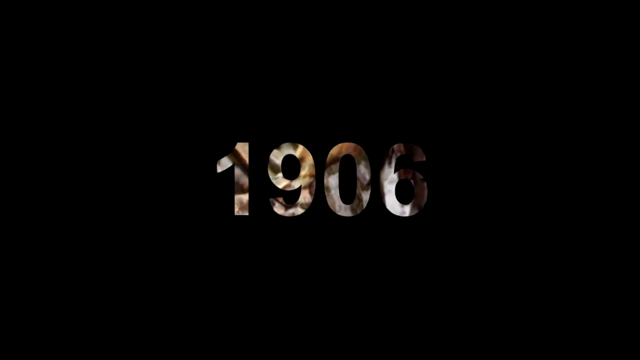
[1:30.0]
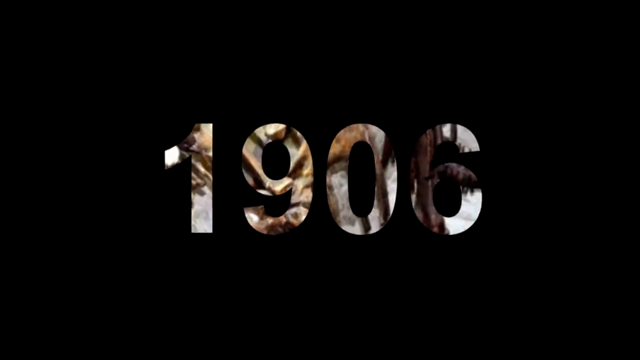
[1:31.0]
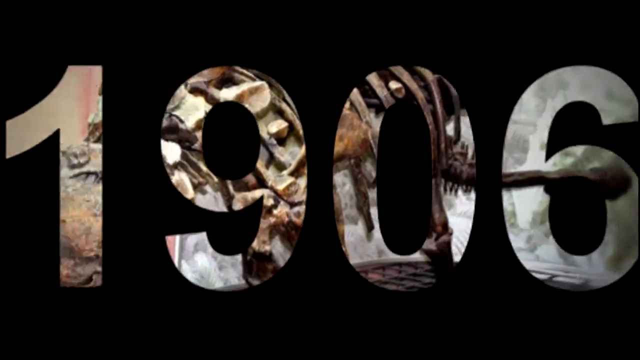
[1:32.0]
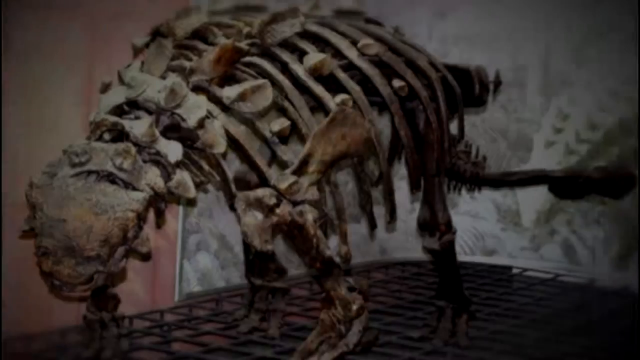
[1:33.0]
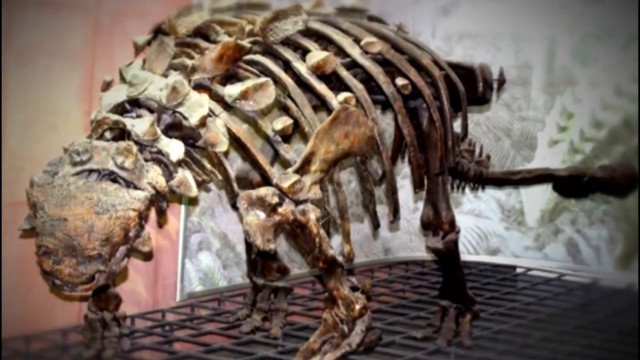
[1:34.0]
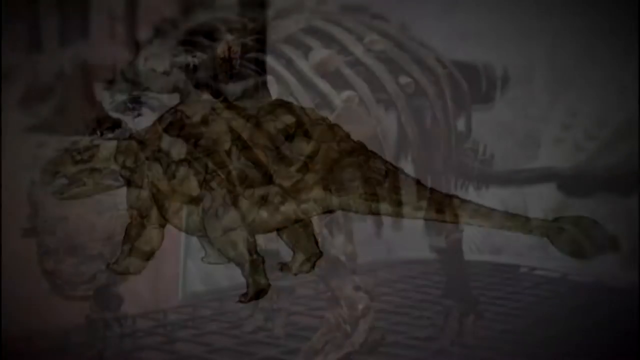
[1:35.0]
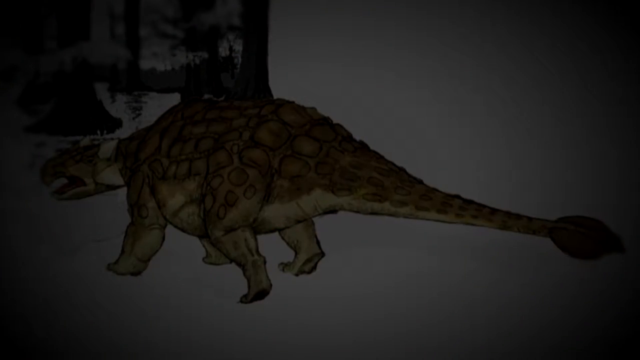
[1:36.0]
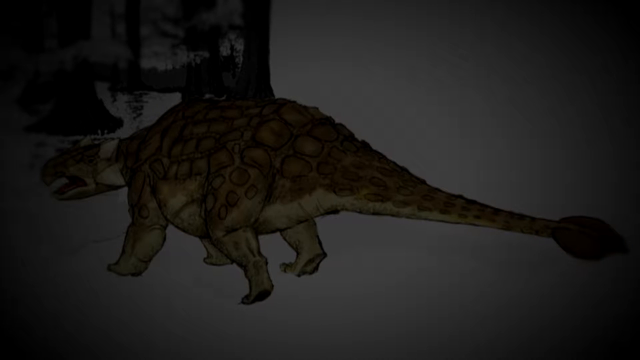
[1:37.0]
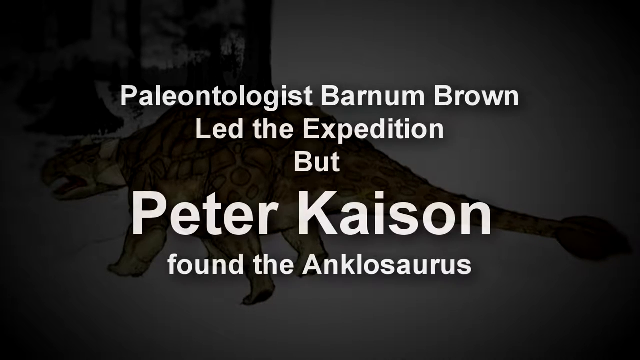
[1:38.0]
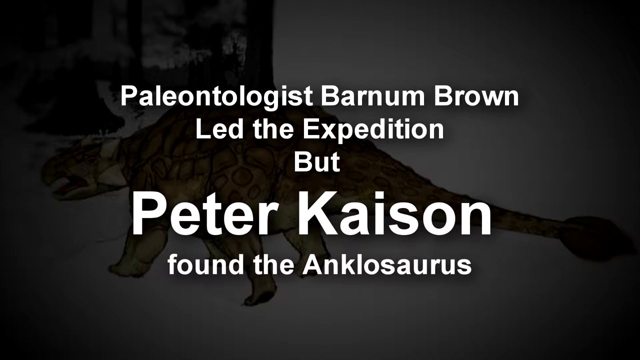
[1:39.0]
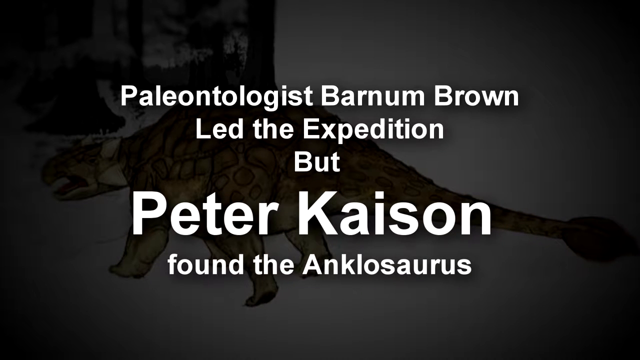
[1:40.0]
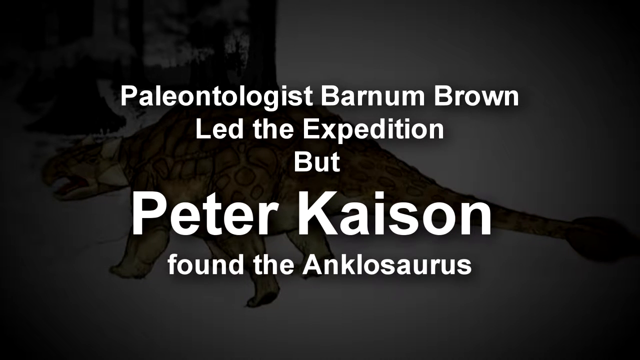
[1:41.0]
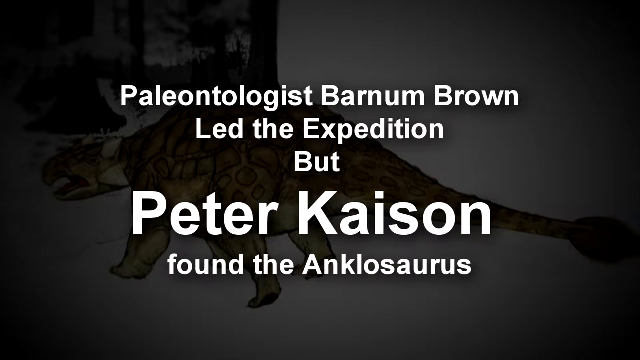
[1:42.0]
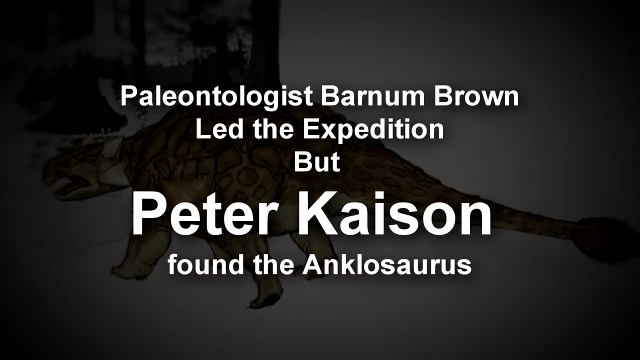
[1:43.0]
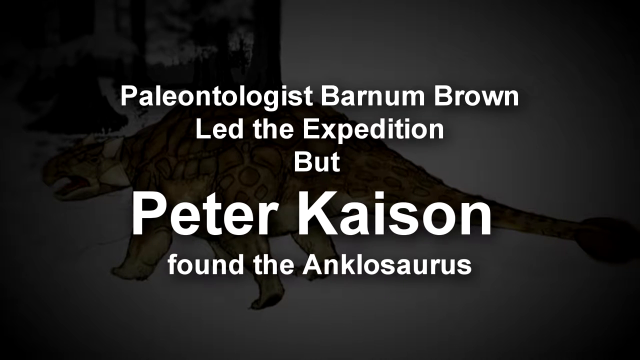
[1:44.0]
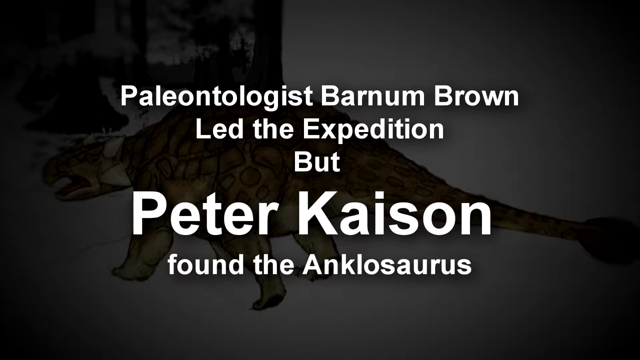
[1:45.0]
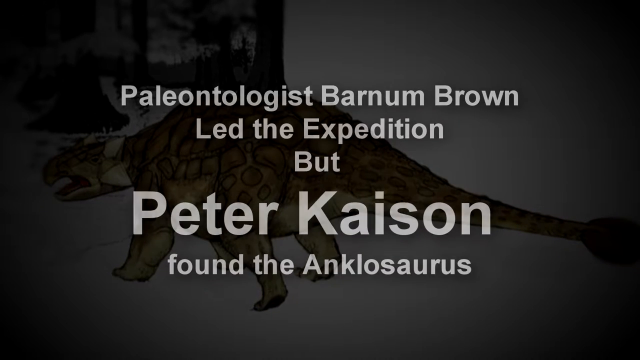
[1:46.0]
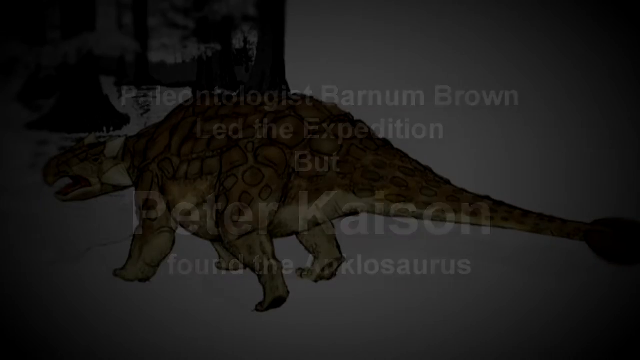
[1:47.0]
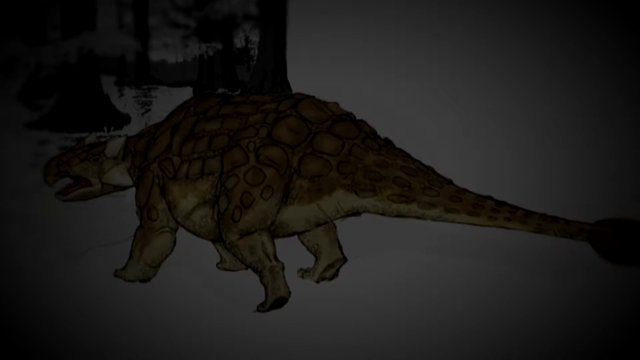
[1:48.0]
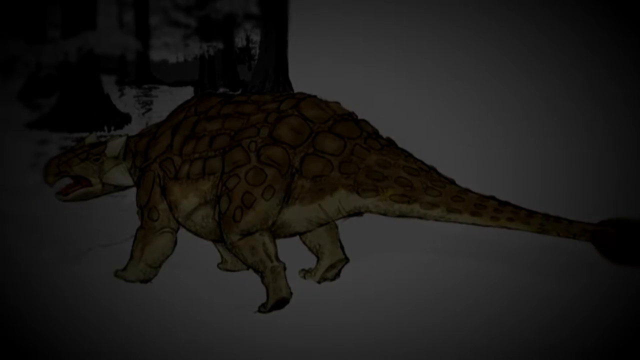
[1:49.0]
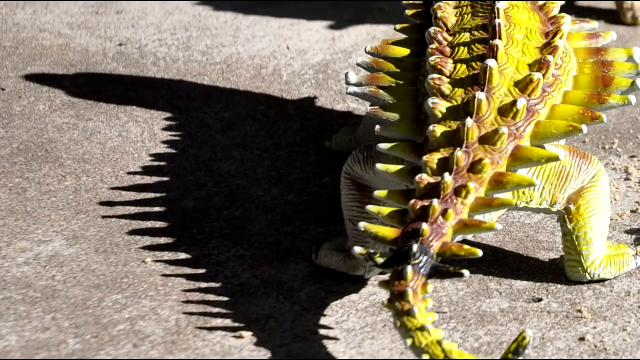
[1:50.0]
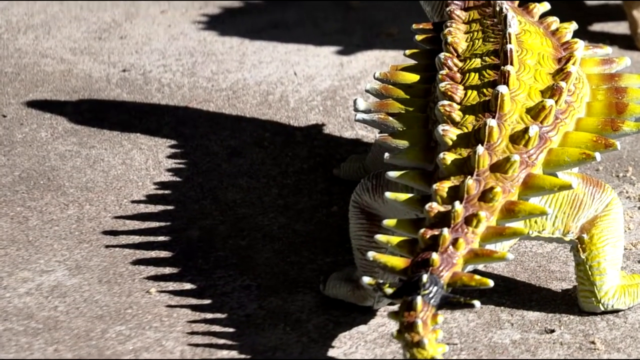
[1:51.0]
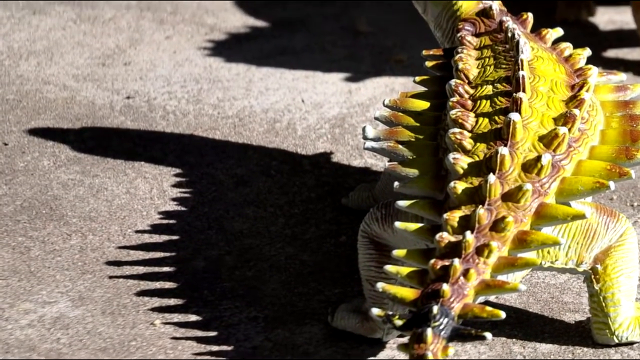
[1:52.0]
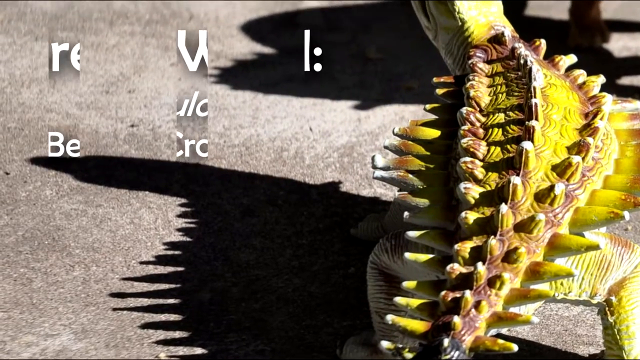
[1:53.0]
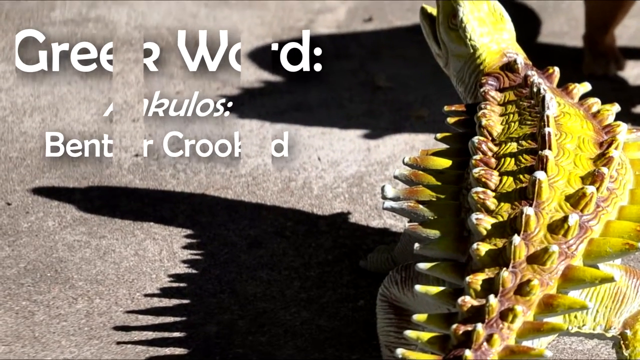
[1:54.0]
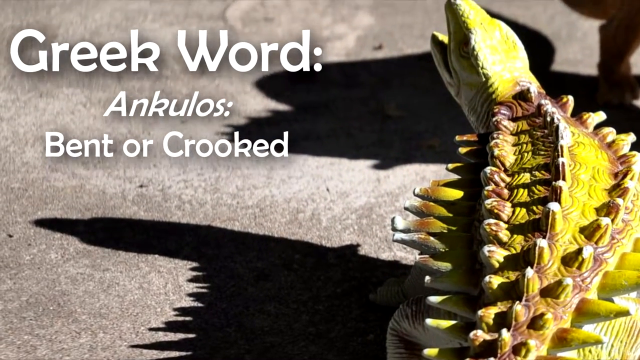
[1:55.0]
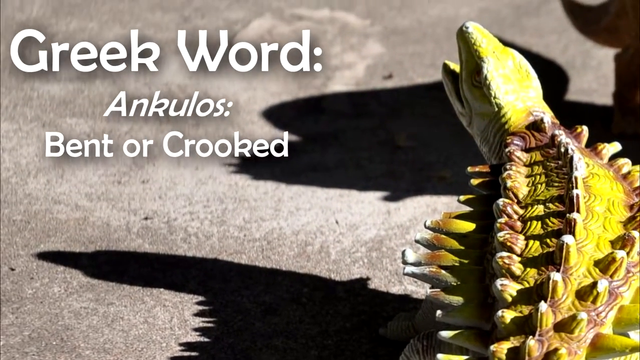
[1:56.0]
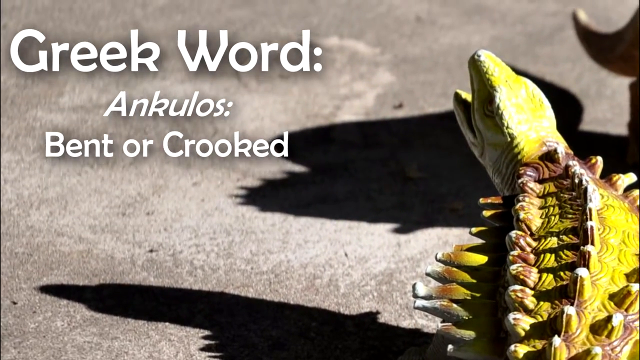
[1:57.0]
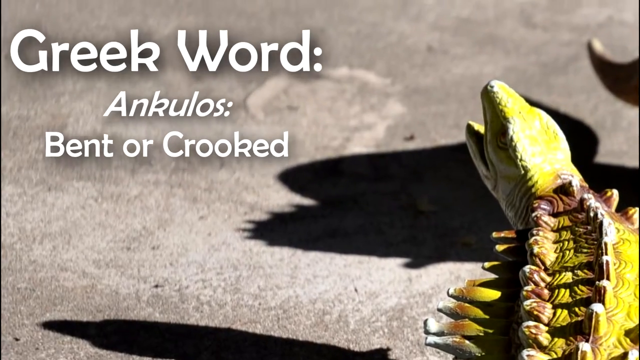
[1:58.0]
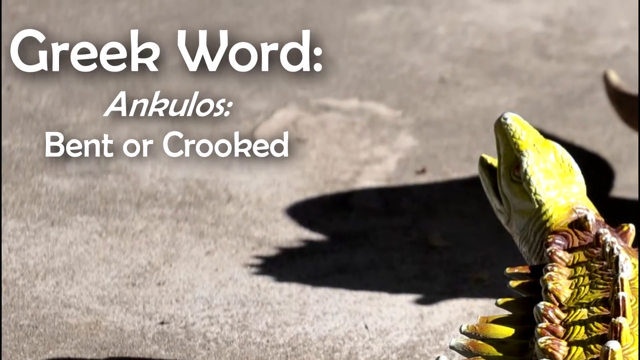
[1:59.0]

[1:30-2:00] The screen turns black and shows the year "1906" in the middle in translucent text that grows larger and larger. The image of the fossilized dinosaur that was behind the text is then shown in its entirety. A previously shown drawing of the dinosaur appears, seemingly with a faded black filter on top of it. White text appears saying "Barnum Brown led the expedition to find the Ankylosaurus, but Peter Kaison found it," with Peter Kaison's name written much larger than the rest of the paragraph. The text fades out, leaving only the darkened dinosaur on the screen. Another computer-generated image of the dinosaur is shown, with yellow coloring on its back. The sun shines on top of and around the dinosaur, and its shadow is on the pavement beside it, with the large spikes of its body appearing as sharp spikes in the shadow. The image moves forward and shows the animal's face. Text appears on the left side of the image saying "Greek word, ankulos: bent or crooked."